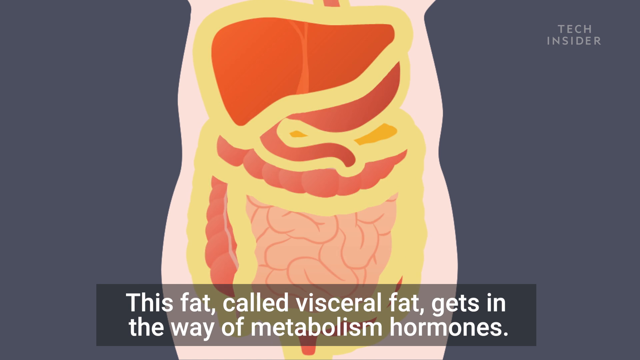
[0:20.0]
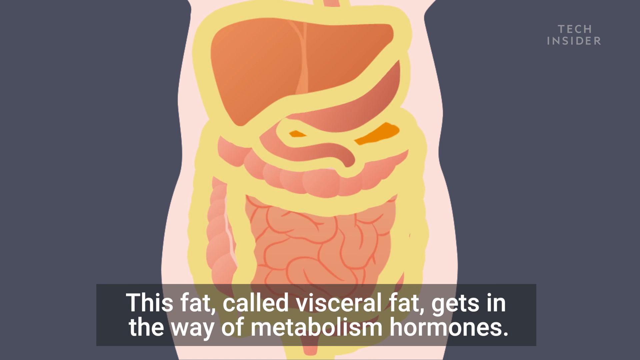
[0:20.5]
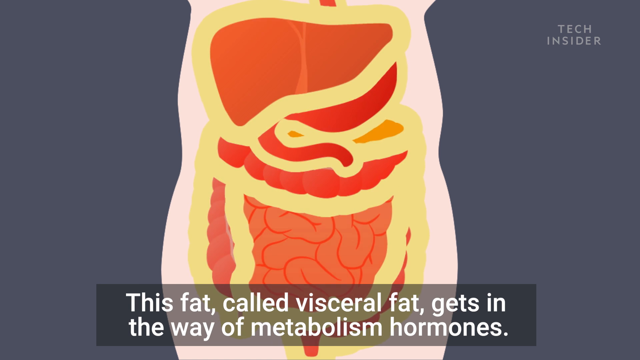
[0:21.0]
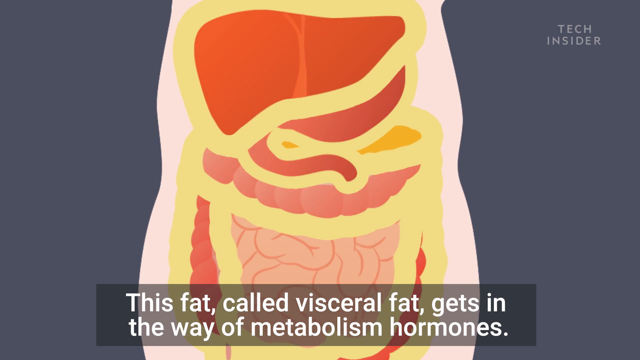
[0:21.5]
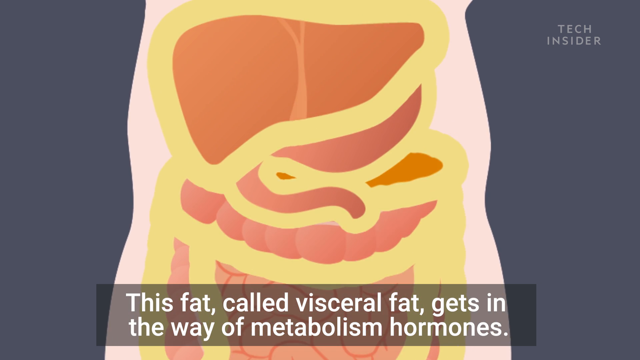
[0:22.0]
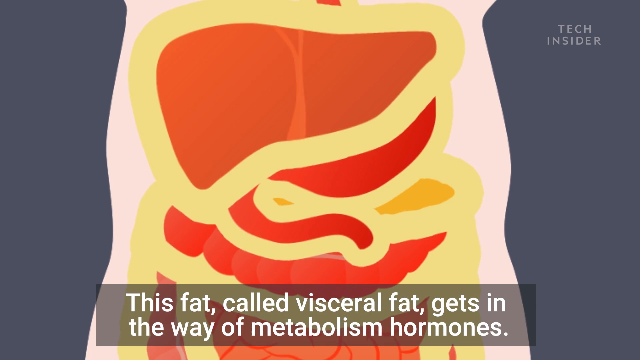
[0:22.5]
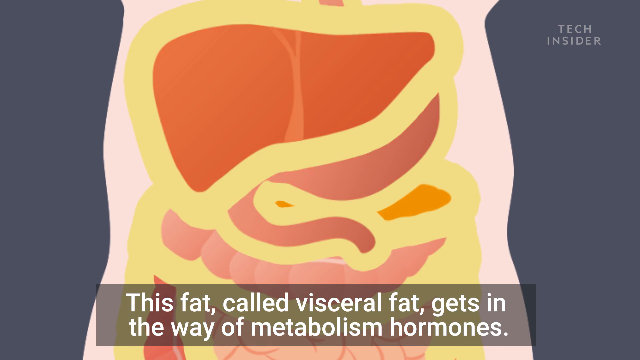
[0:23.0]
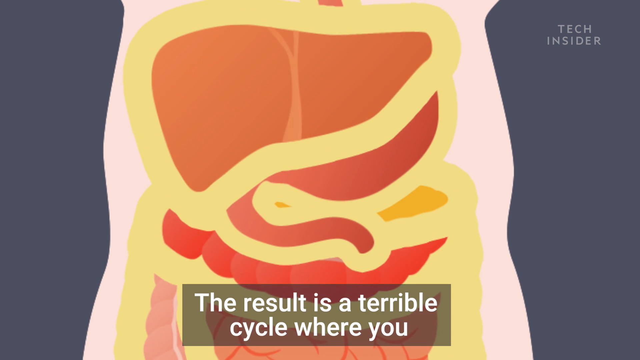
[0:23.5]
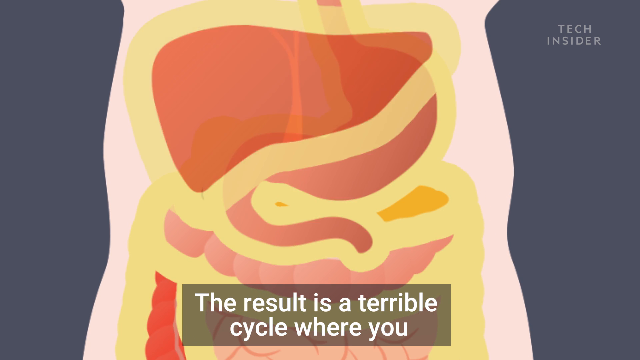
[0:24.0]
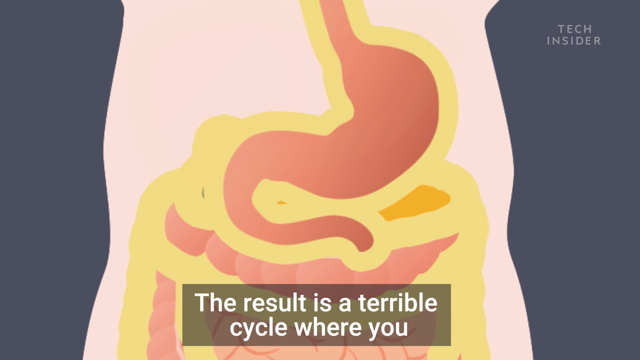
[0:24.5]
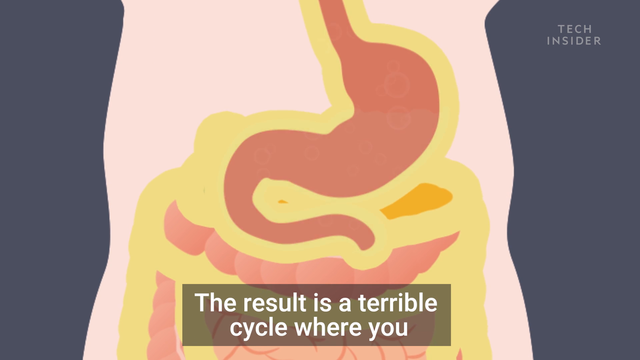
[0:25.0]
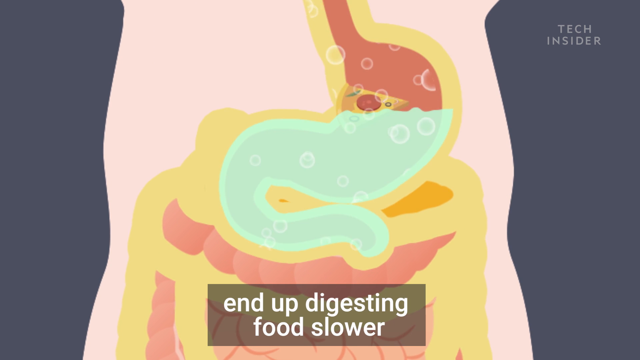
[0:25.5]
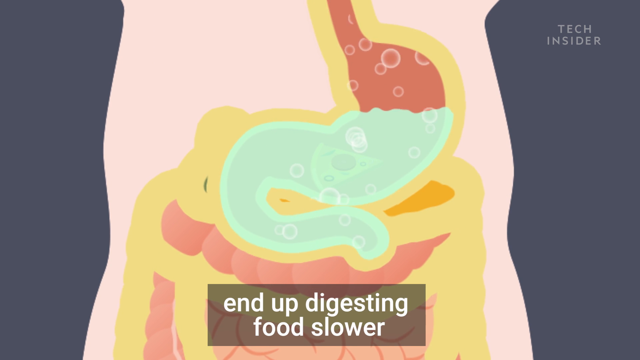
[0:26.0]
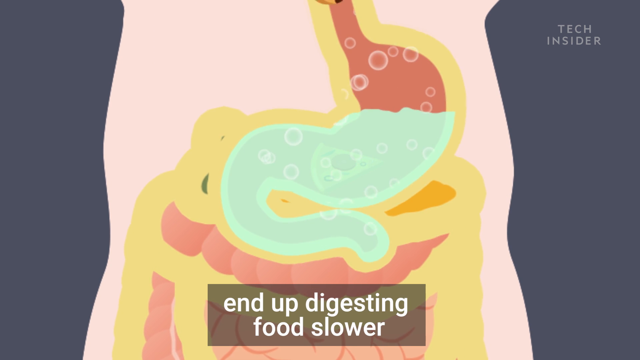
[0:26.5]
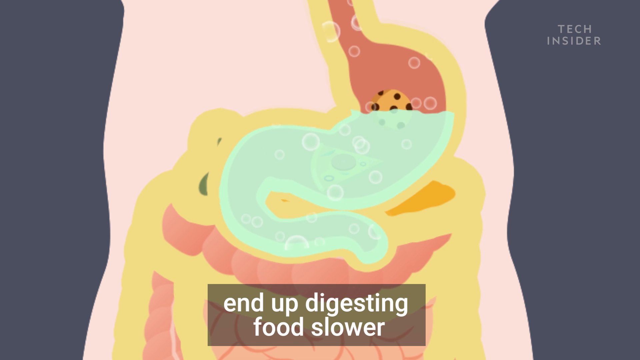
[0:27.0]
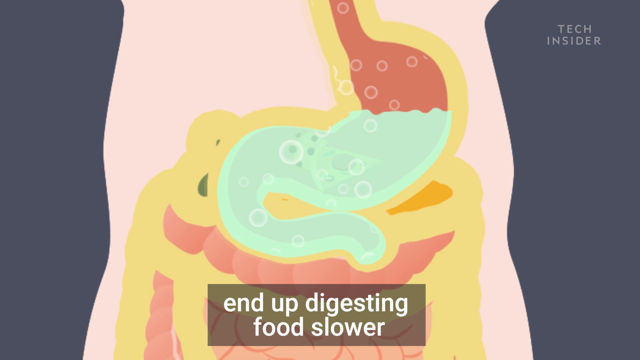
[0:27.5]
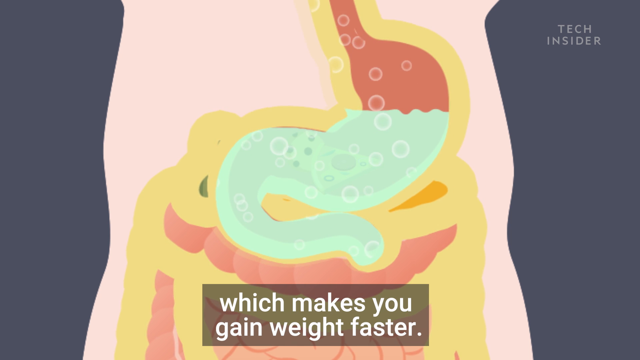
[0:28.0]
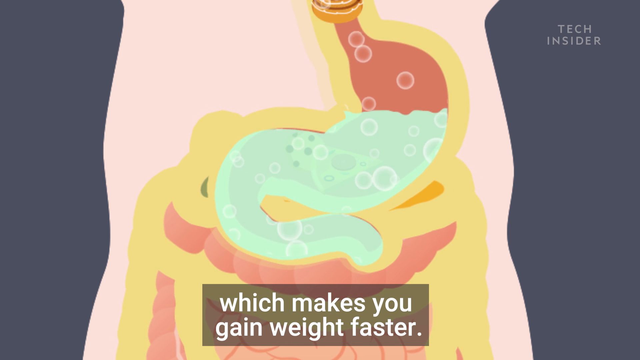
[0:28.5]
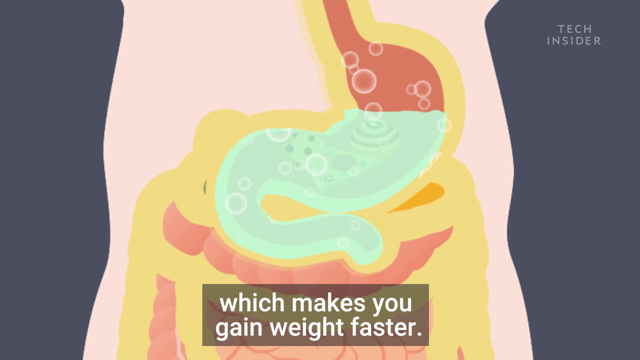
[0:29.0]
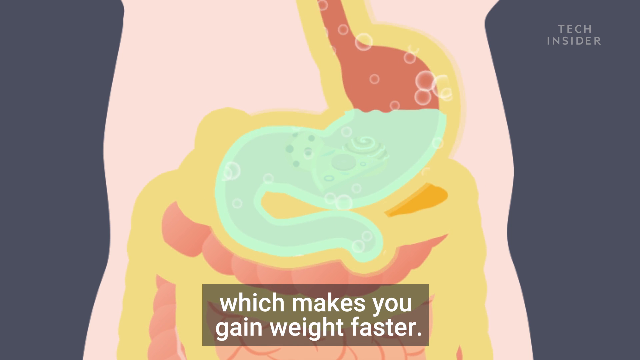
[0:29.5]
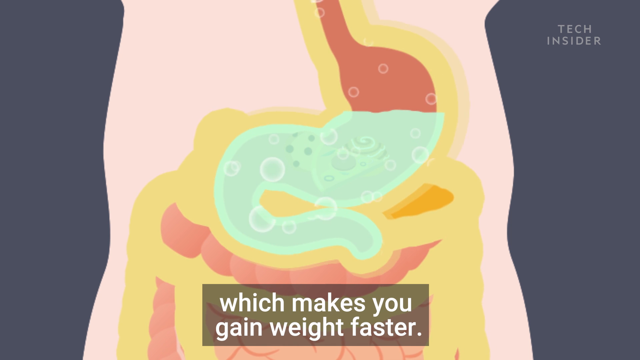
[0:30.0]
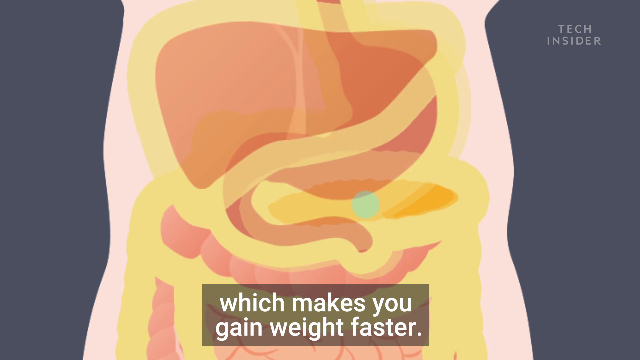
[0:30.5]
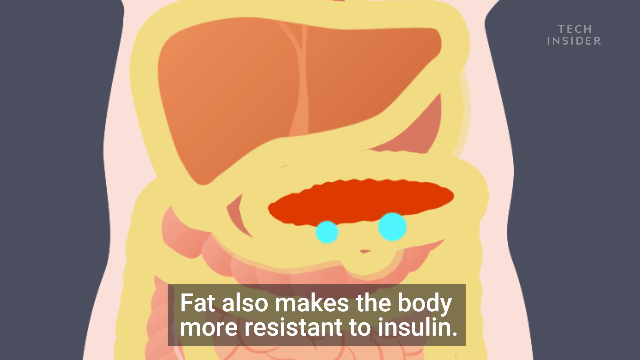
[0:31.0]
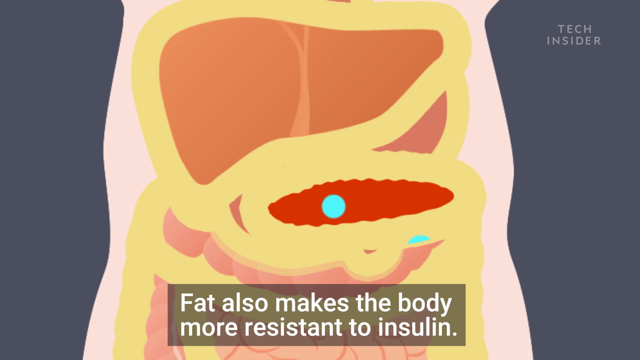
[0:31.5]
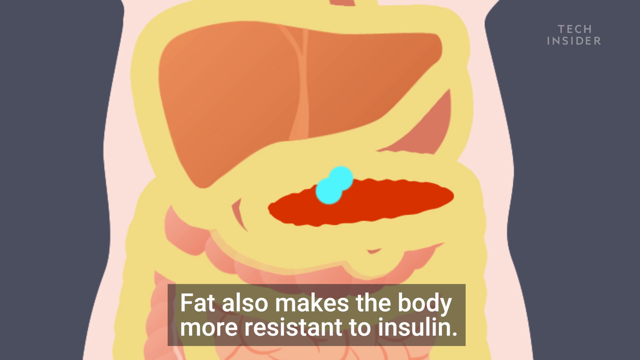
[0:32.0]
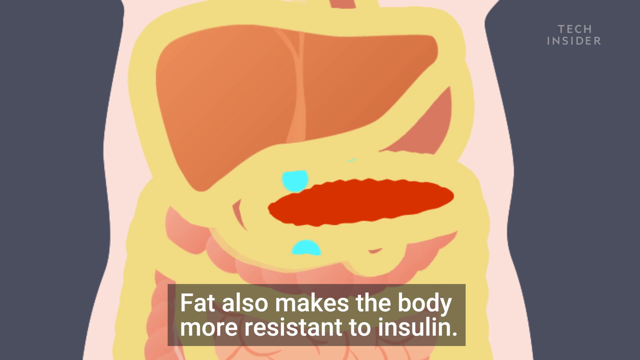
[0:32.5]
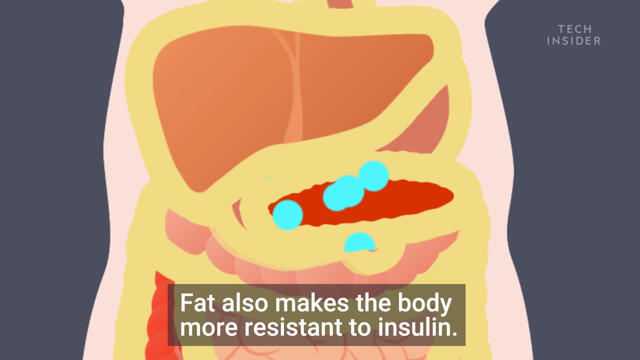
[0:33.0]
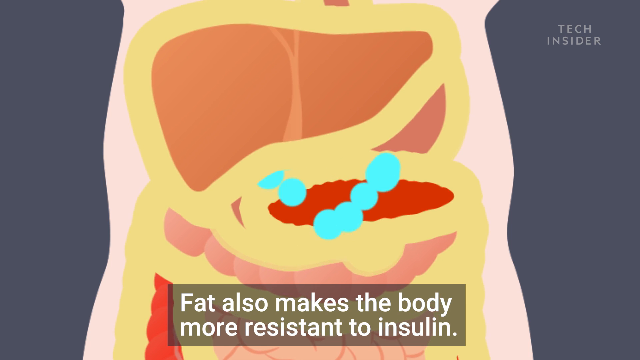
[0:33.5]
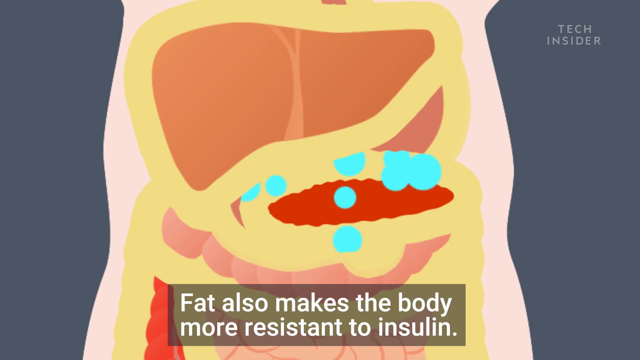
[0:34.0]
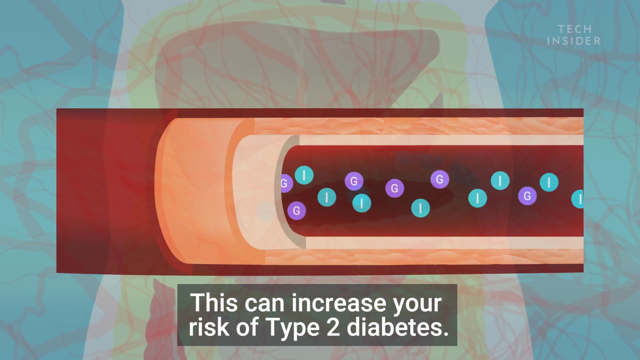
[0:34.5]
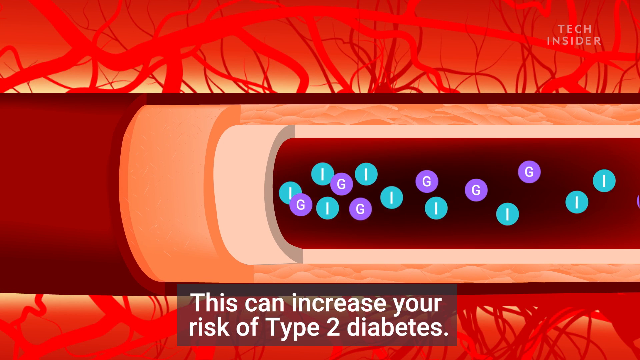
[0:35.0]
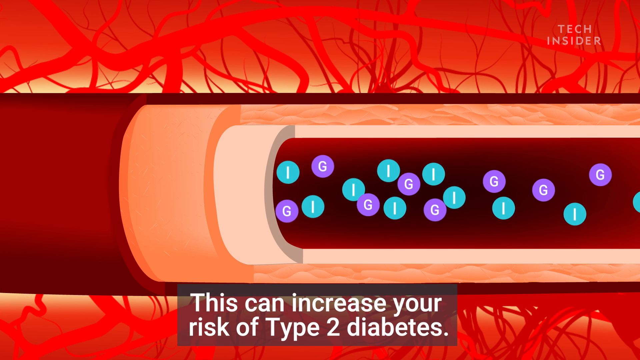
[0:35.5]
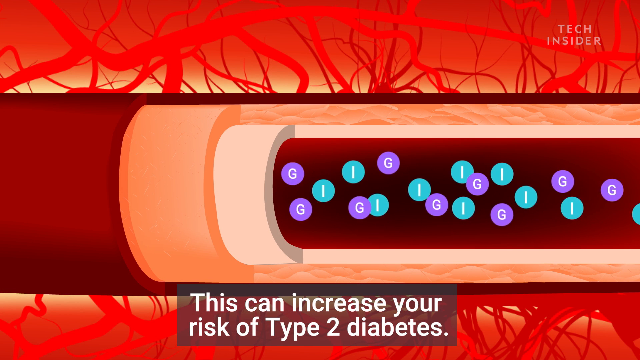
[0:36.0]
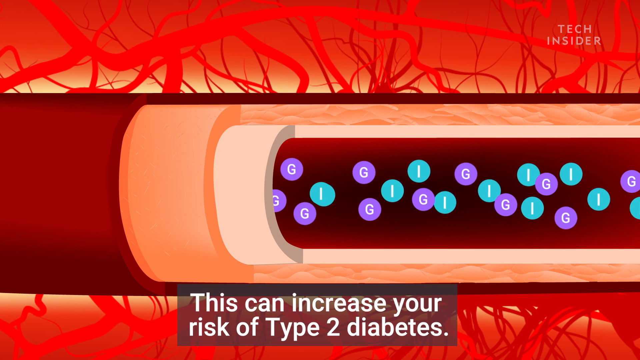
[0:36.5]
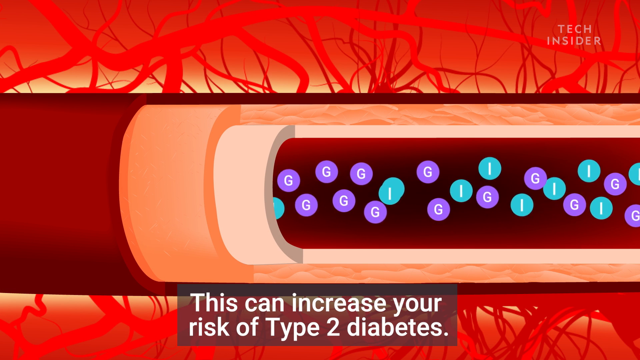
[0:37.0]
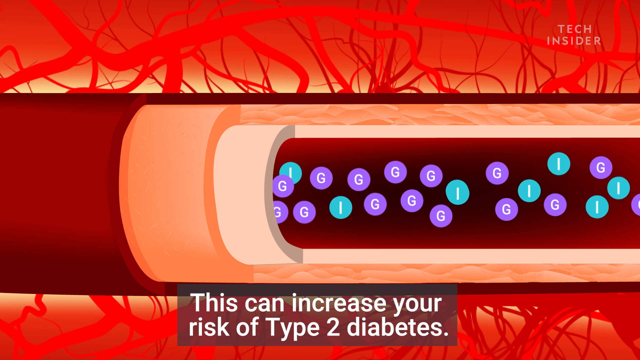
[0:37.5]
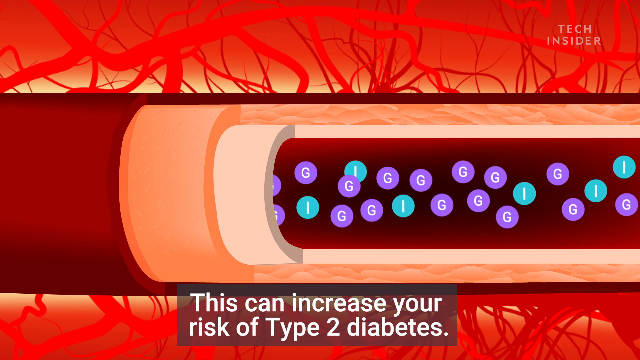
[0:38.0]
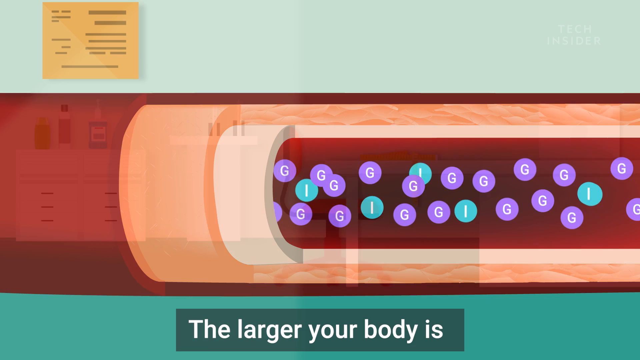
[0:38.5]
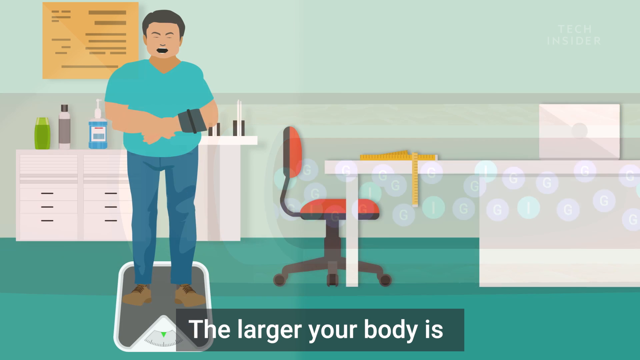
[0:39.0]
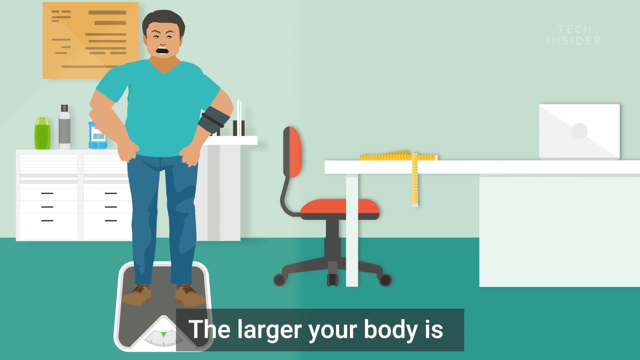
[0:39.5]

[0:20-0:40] The internal organs are shown with the text "this fat called visceral fat gets in the way of metabolism hormones." As the video zooms in, the text changes to "the result is a terrible cycle where you end up digesting food slower which makes you gain weight faster," while the stomach is shown receiving food and digesting it in stomach acid. Two light blue circles appear, bouncing, and then many of them bounce around while the text at the bottom reads "fat also makes the body more resistant to insulin." The scene transitions to the text "this can increase your risk of type two diabetes" and sort of a tube, presumably representing a blood vessel, through which many small light blue and purple circles with the letters I and G travel. Next, a man steps onto a weighing scale with a blood pressure cuff on his left arm. He seems to be inside a doctor's office, his face looks stressed, and the text underneath reads "the larger your body is the higher your blood pressure will be."